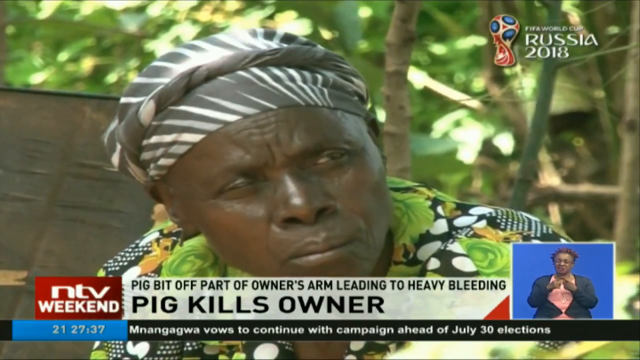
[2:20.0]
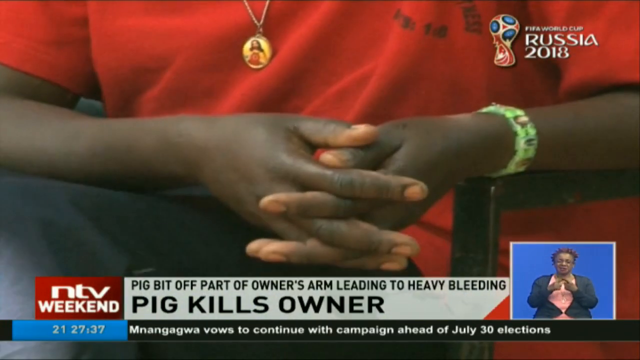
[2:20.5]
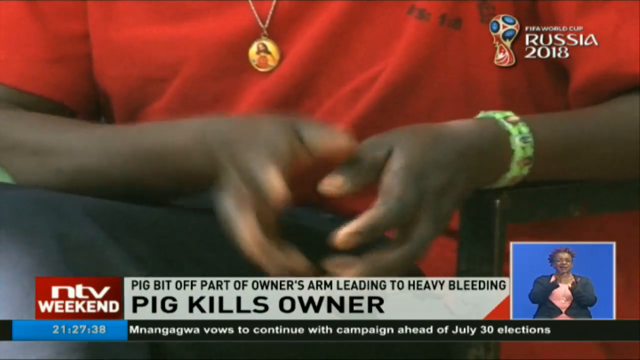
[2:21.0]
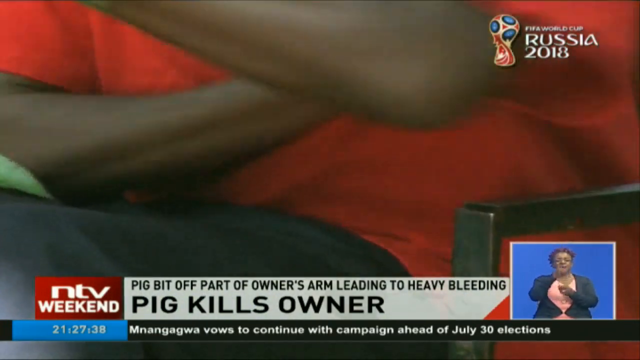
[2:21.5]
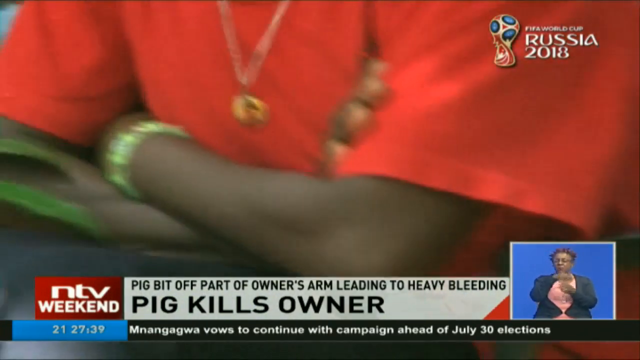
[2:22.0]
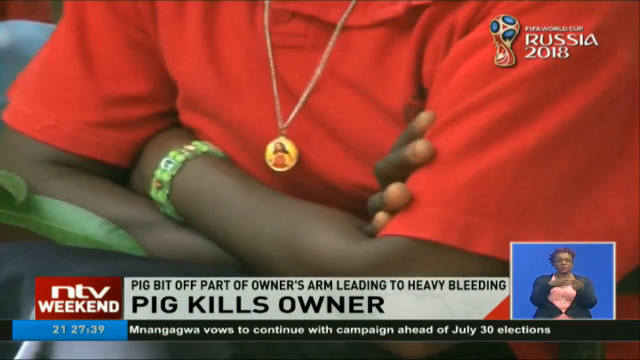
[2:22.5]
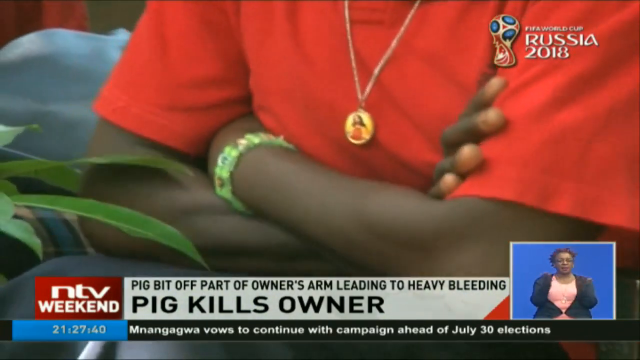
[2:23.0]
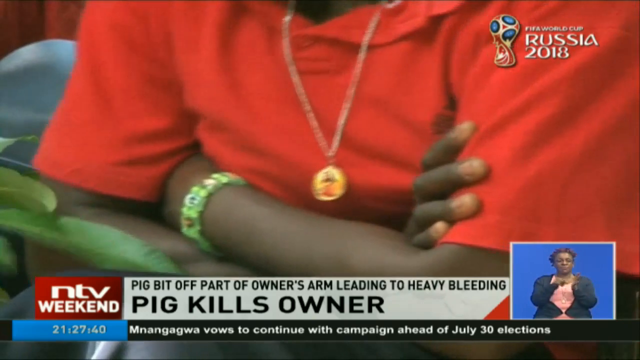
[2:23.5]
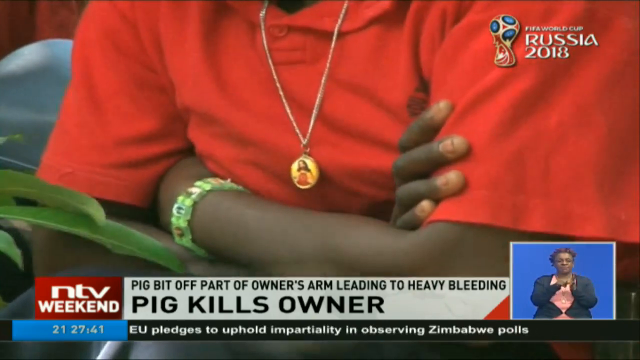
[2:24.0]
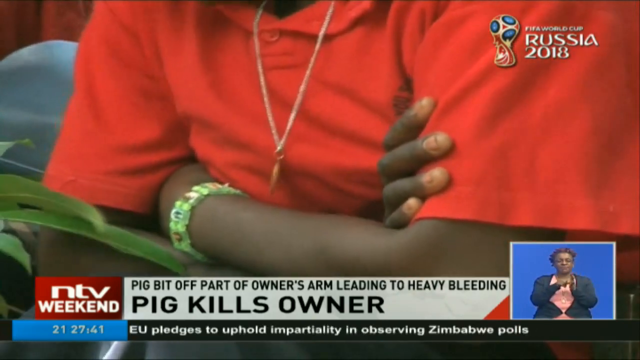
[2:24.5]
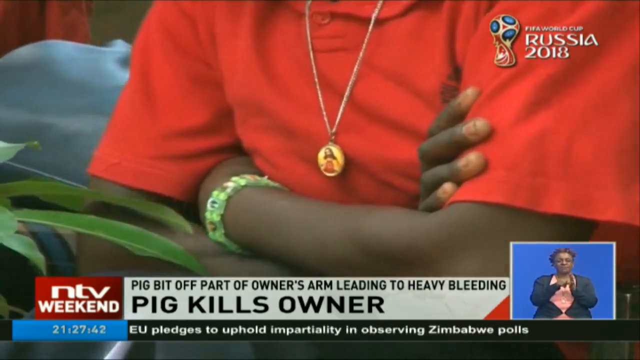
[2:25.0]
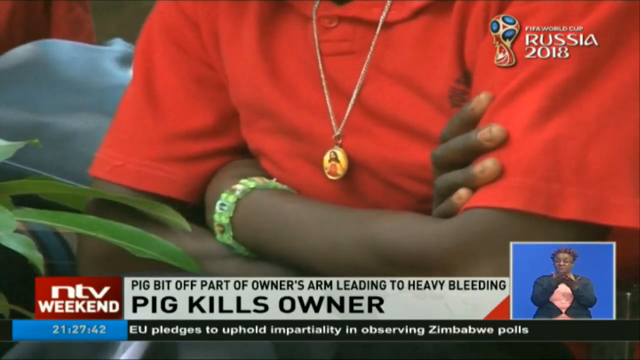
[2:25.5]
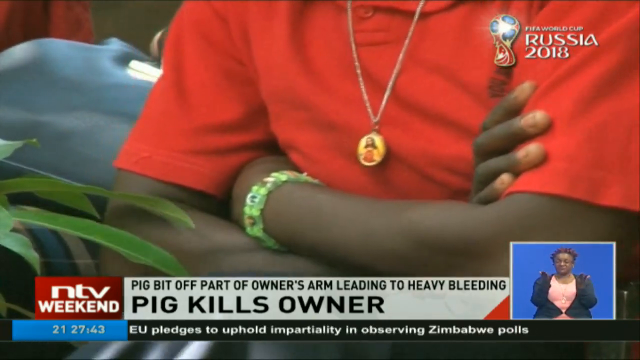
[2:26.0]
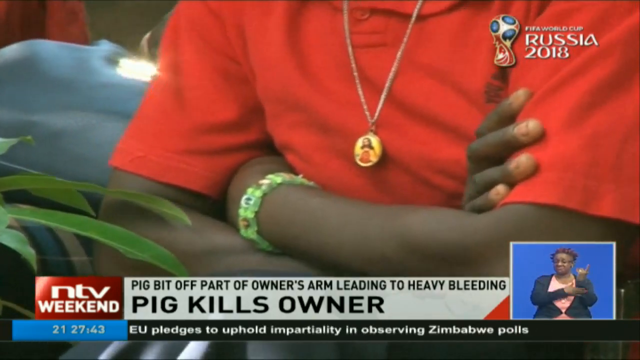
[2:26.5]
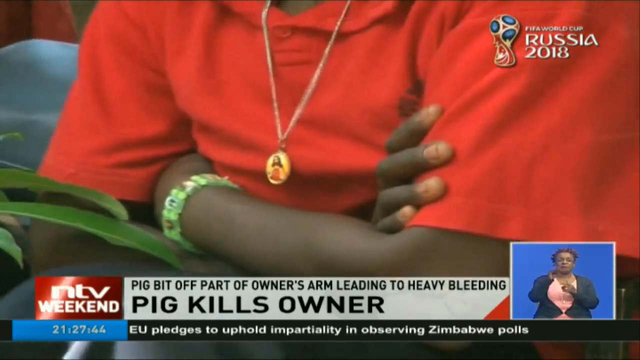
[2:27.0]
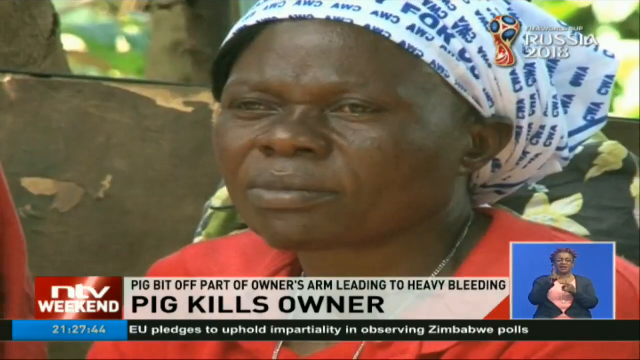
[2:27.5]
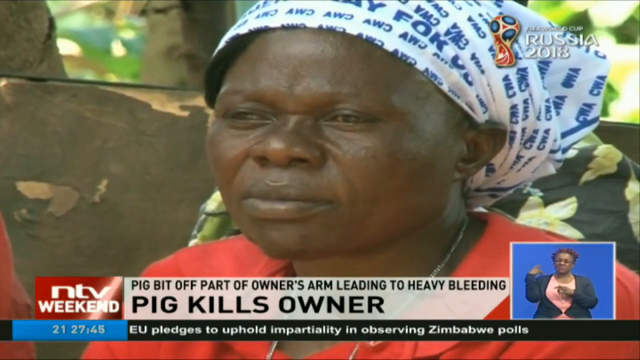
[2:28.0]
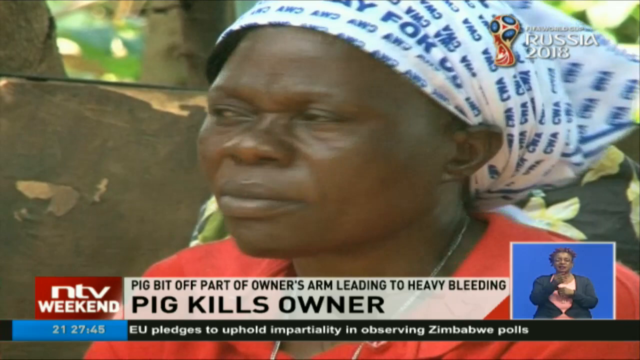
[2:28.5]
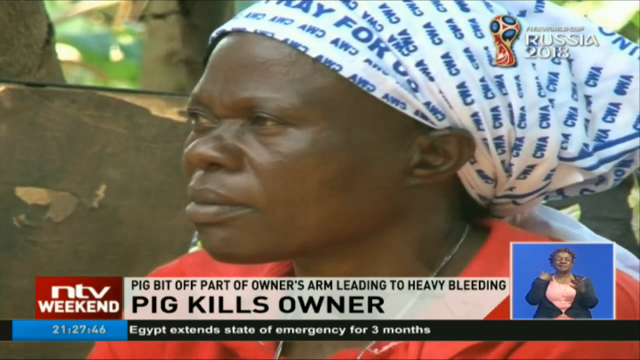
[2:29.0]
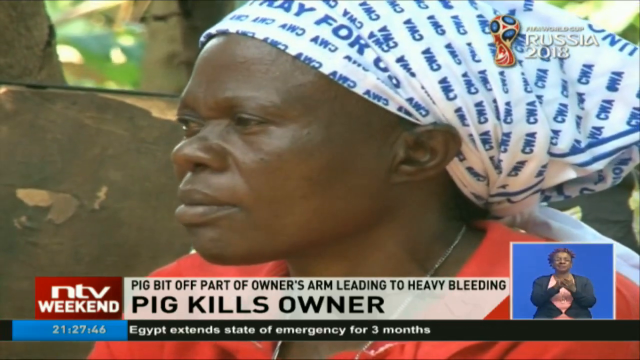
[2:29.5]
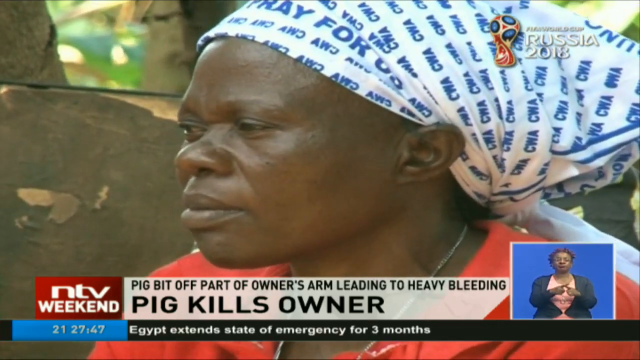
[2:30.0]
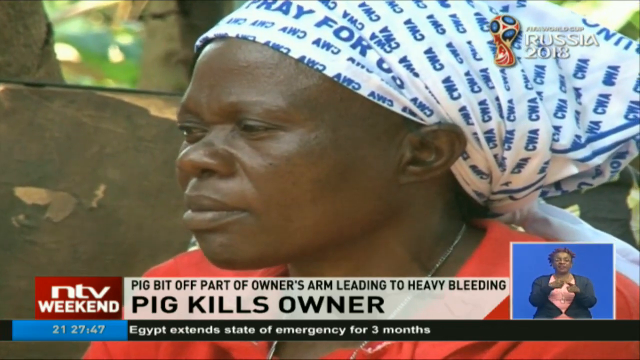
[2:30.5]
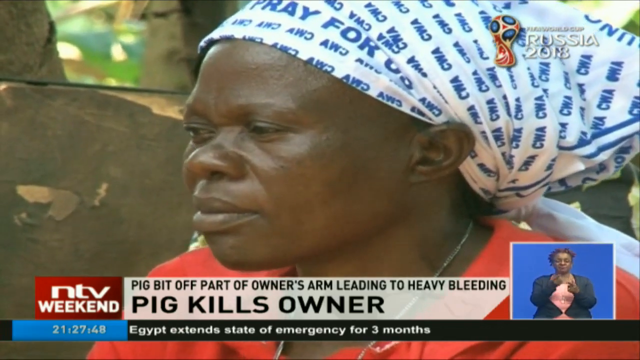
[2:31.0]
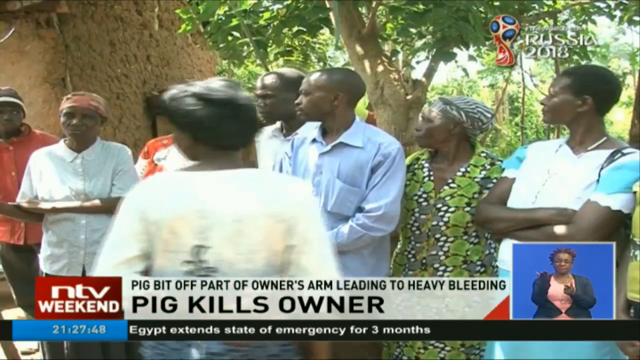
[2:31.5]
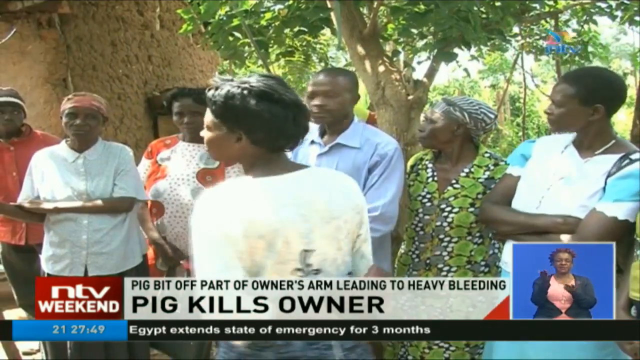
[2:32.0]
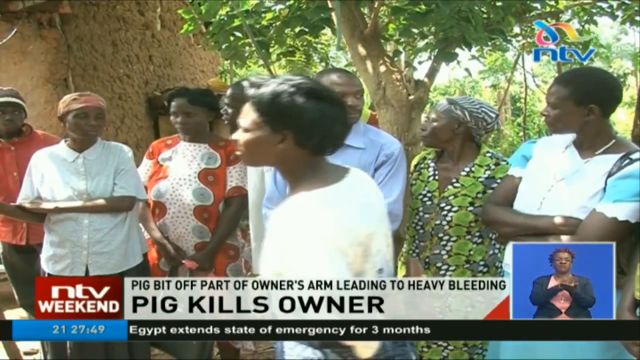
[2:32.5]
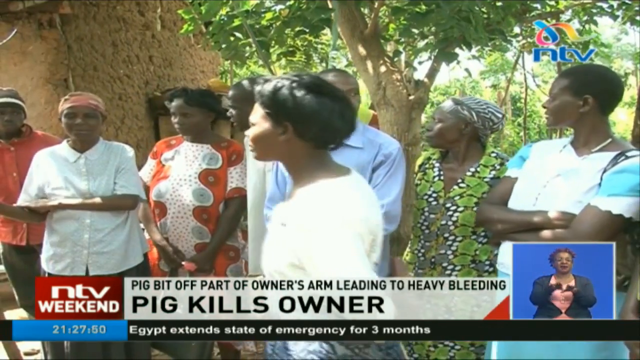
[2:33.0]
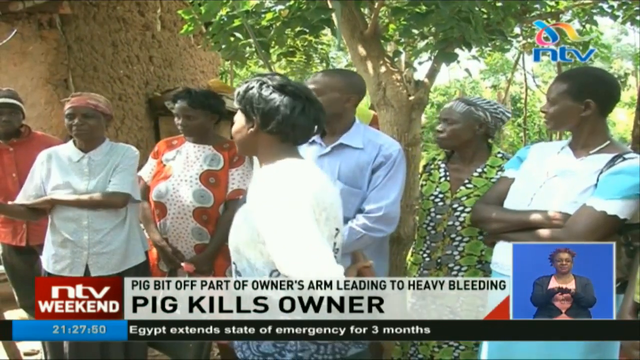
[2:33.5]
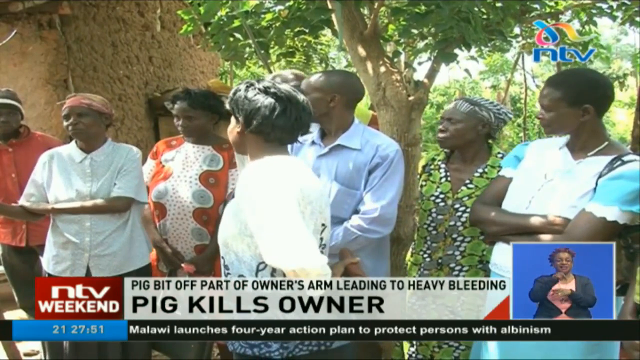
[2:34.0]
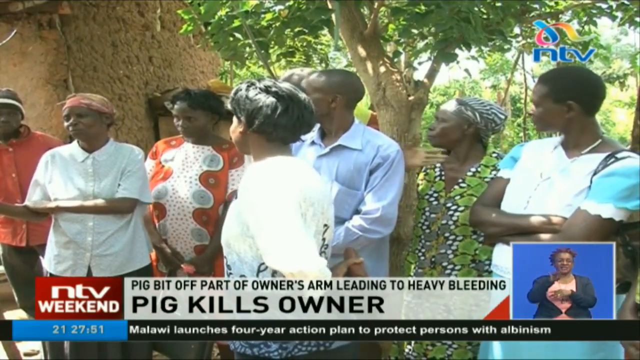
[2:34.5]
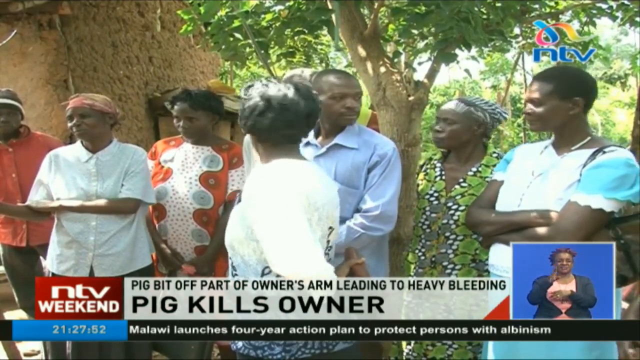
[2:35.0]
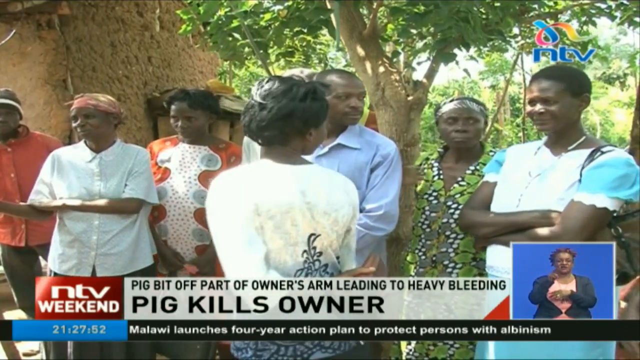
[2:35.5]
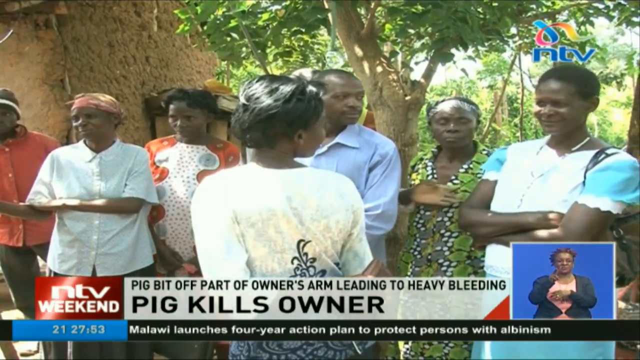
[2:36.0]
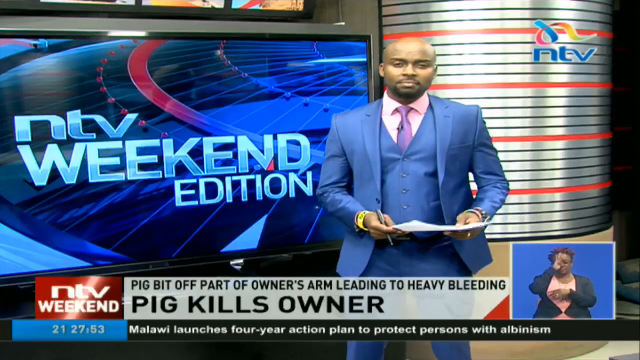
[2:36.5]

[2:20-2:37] The old black woman in the striped brown and cream white headscarf seems shocked and sad, as if speechless, and seems to be just sitting there. Another old woman appears, wearing a red golf t-shirt, a green bracelet on her left wrist, a white headscarf that seems to have words written on it, and a necklace; she seems to be 50 to 65 years old and seems restless and distressed. After that, some people are standing under the tree; they seem to be members of Mr. Werunga's family and neighbours.